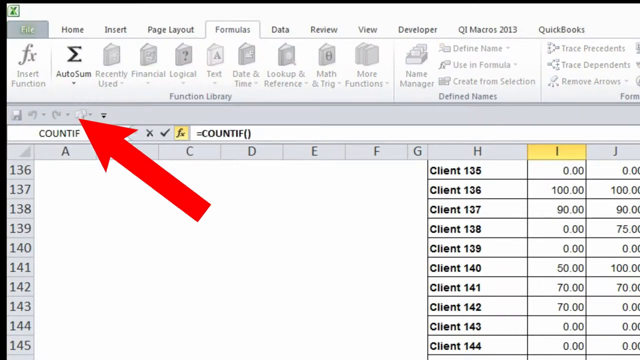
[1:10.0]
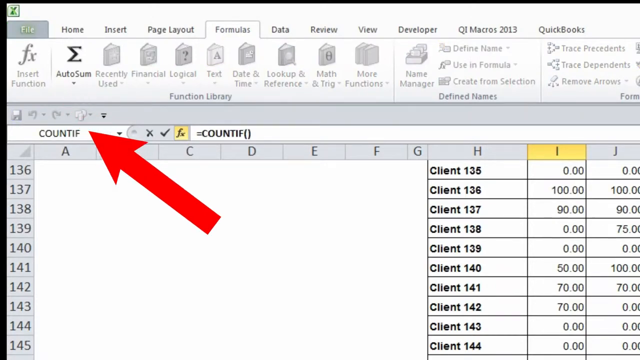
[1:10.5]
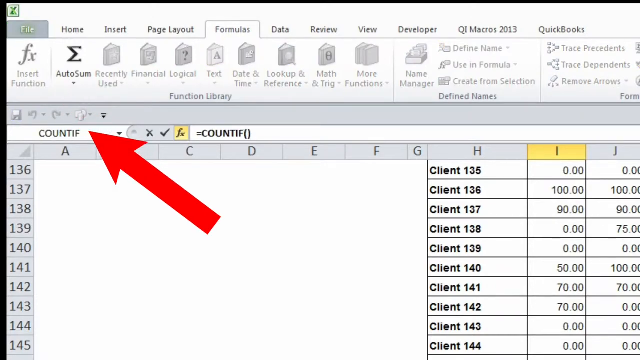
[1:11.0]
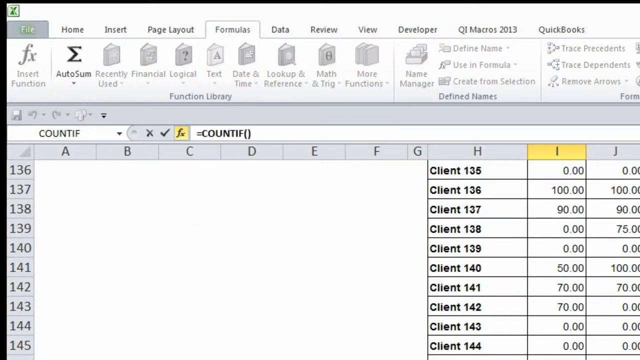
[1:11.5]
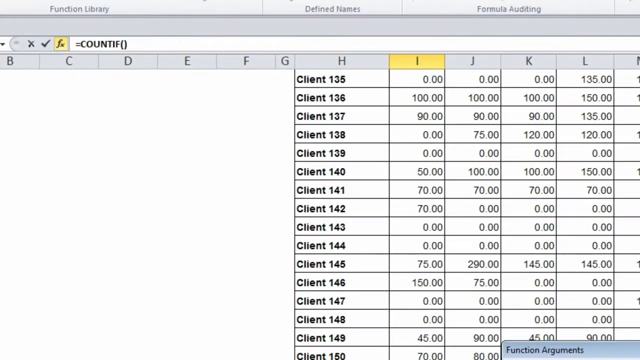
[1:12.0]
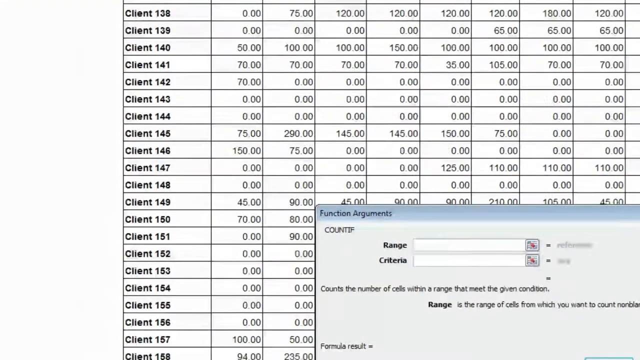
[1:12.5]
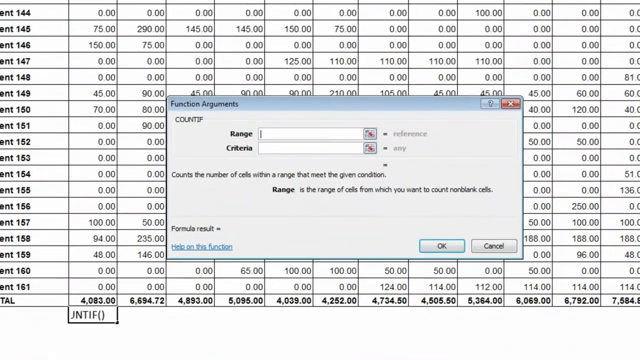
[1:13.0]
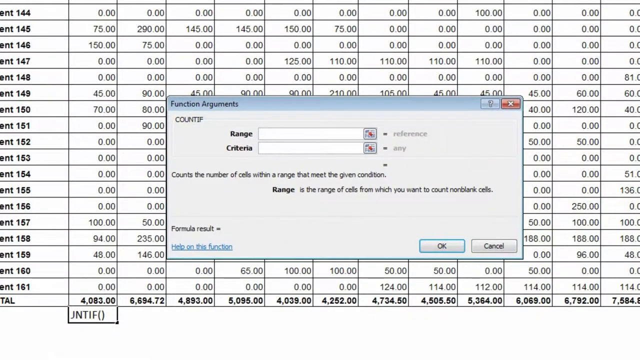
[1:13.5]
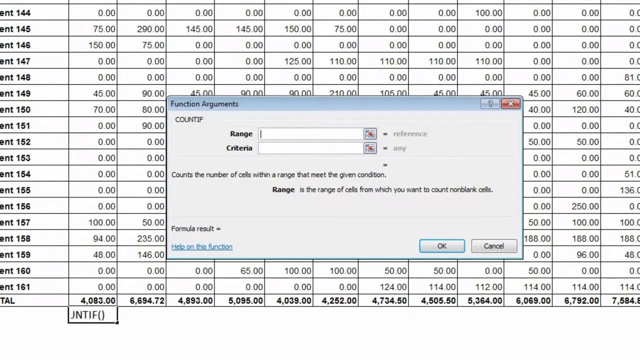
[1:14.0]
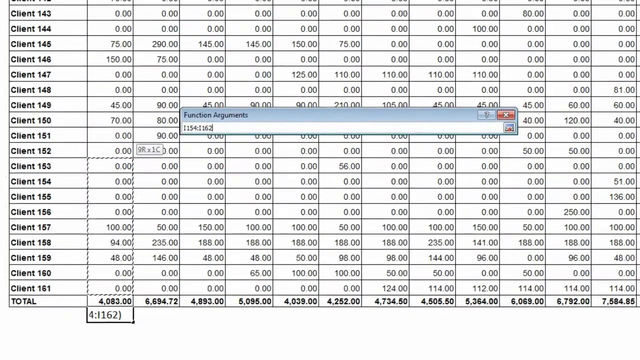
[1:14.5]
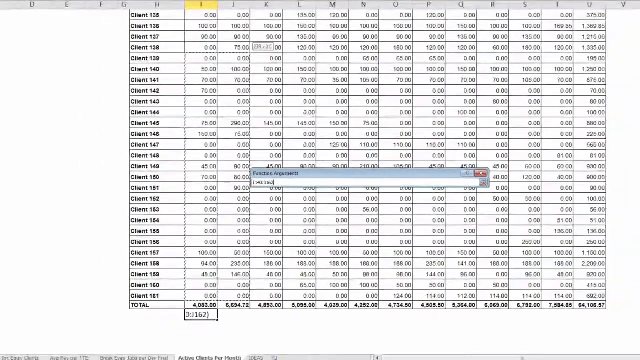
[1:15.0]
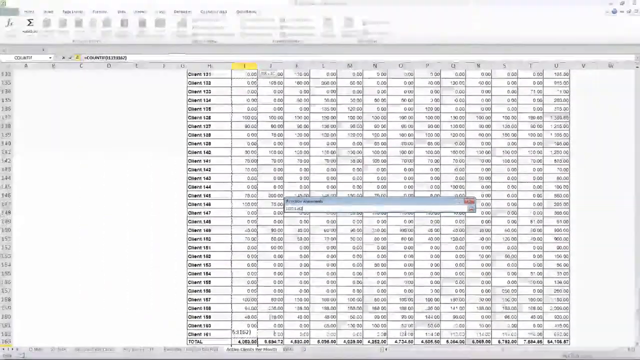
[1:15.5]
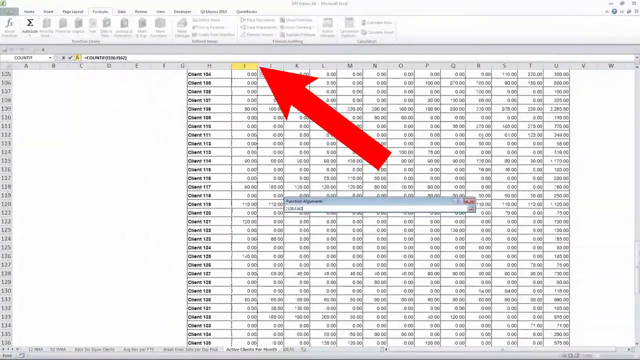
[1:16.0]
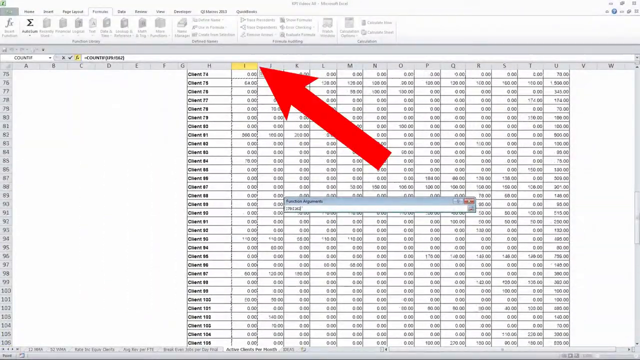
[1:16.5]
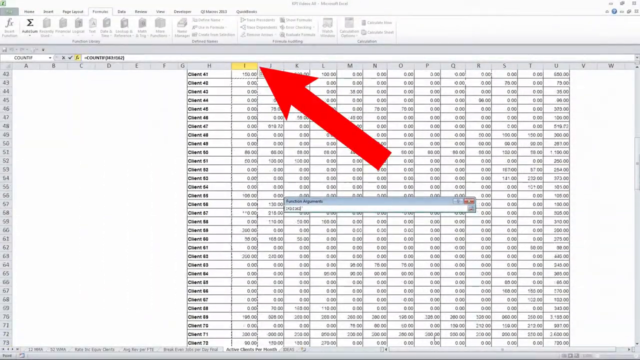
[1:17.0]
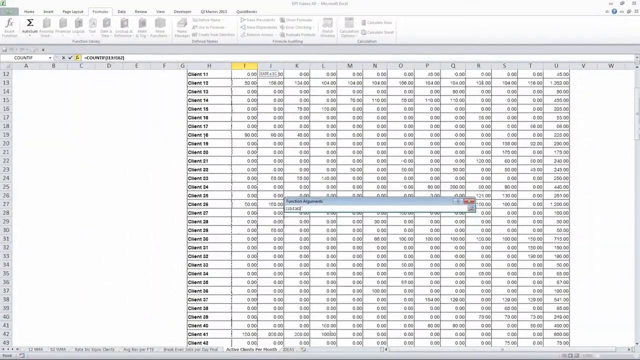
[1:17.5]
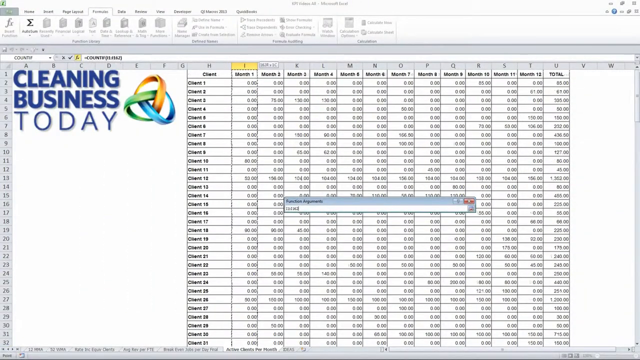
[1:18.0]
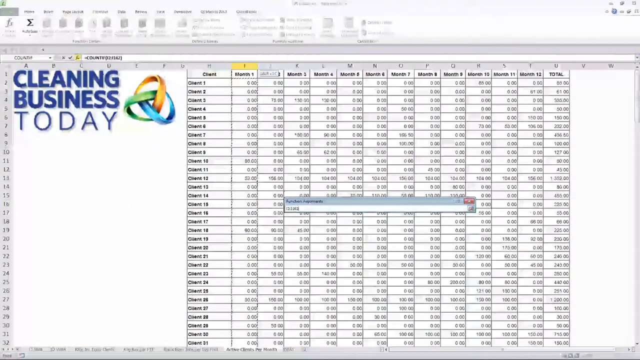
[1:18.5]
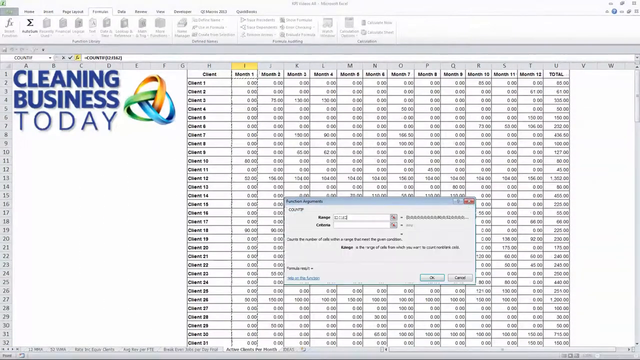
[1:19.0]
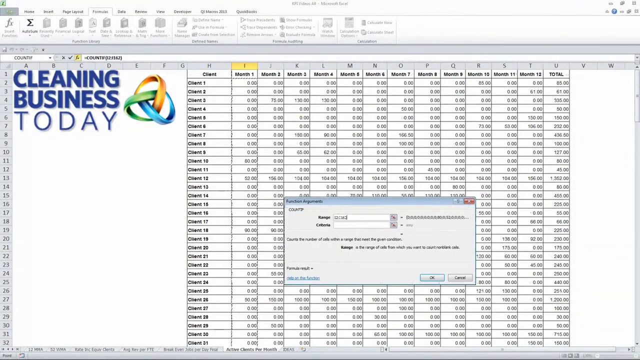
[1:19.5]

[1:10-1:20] The spreadsheet, titled "Active Clients by Month," lists clients for a cleaning business from 1 to 161 across the 12 months of the year, and someone is demonstrating how to use it. They click on what appears to be formula and then an insert option, and a pop-up titled "function arguments" for "Contif" opens. It has a range field with a reference beside it and a pull-down menu, and a criteria field with a pull-down menu. Text in the pop-up reads "count the number of cells within a range that meet the given condition" and "Range is the range of cells from which you want to count non-blank cells," followed by "formula result," "help on this function," "OK" and "cancel." The person then goes to what looks like column I and scrolls up.